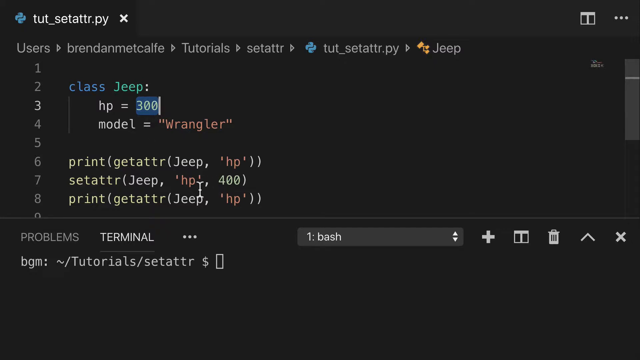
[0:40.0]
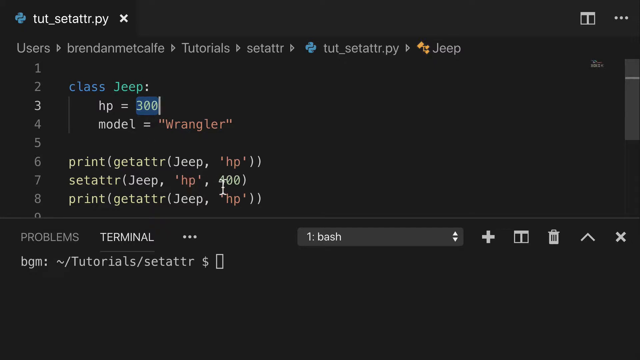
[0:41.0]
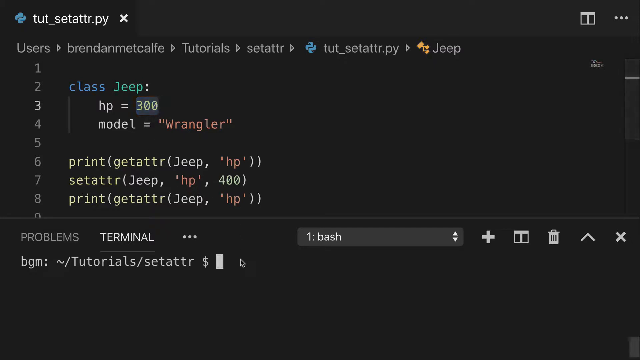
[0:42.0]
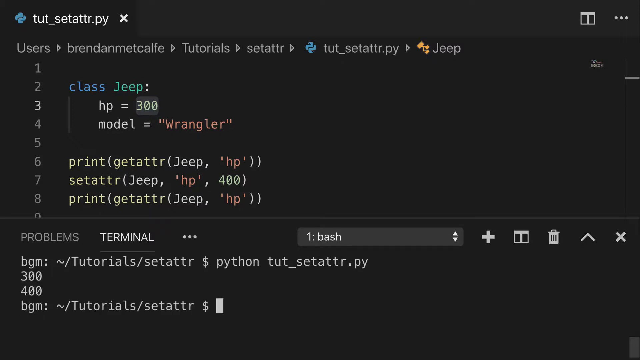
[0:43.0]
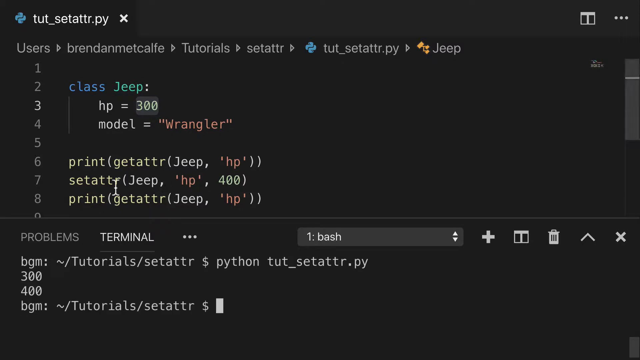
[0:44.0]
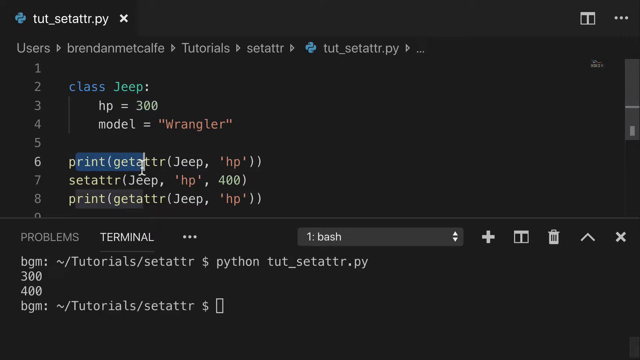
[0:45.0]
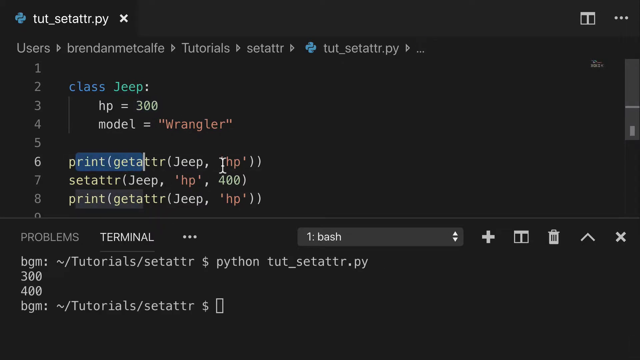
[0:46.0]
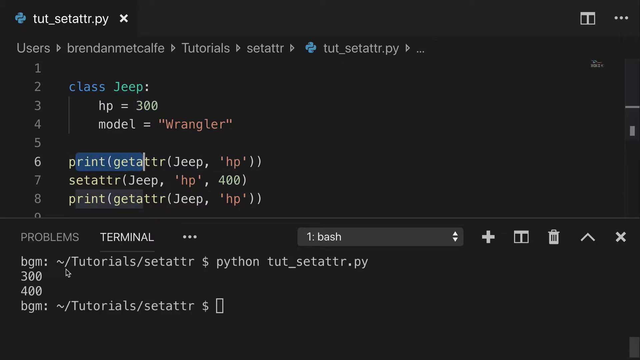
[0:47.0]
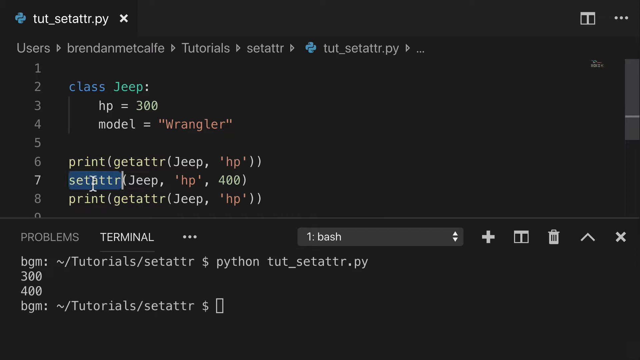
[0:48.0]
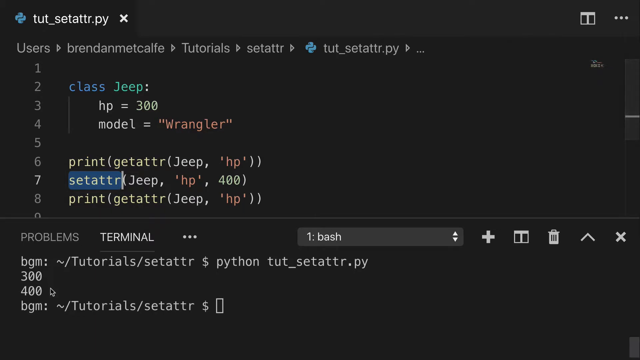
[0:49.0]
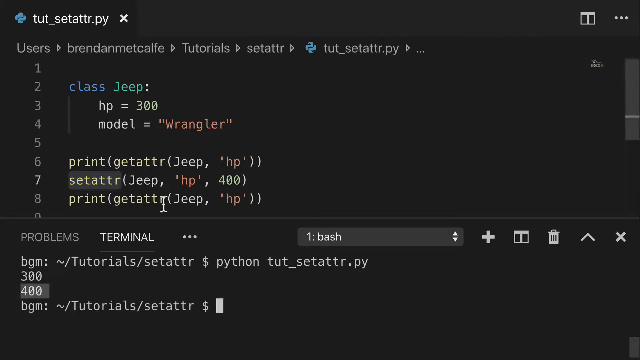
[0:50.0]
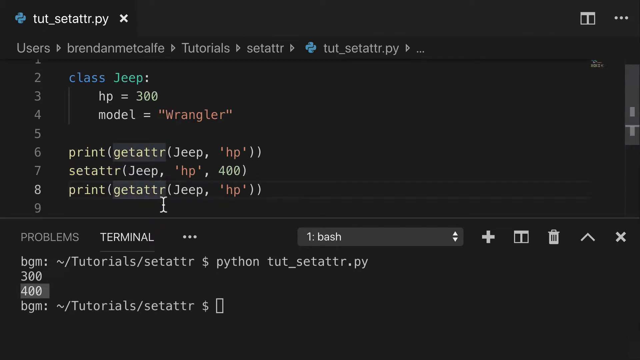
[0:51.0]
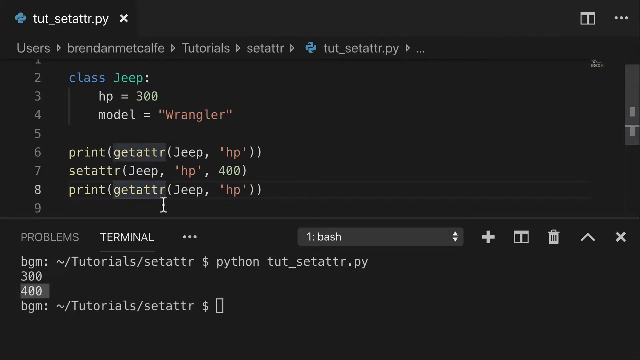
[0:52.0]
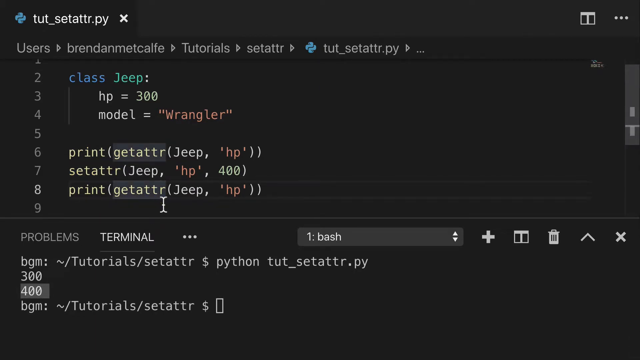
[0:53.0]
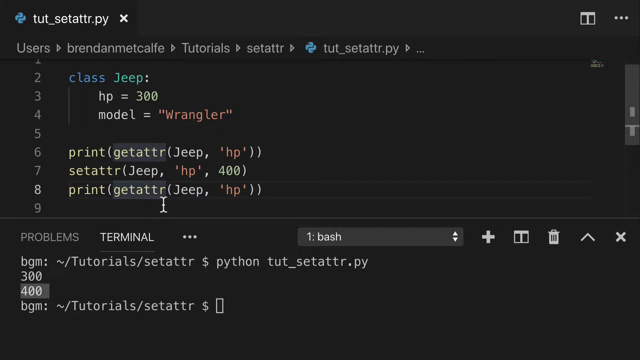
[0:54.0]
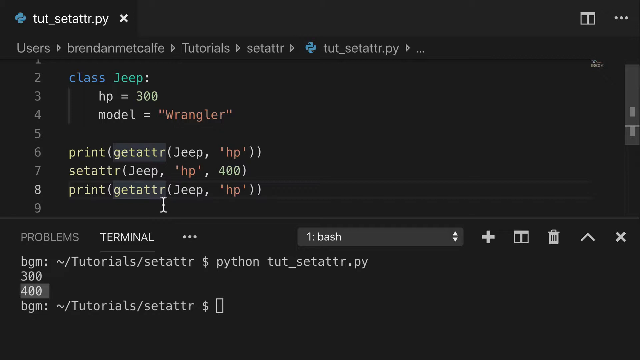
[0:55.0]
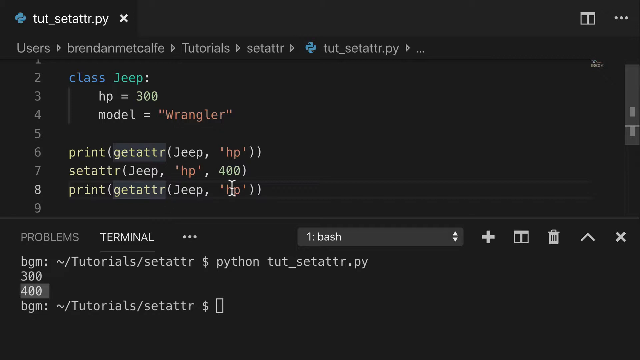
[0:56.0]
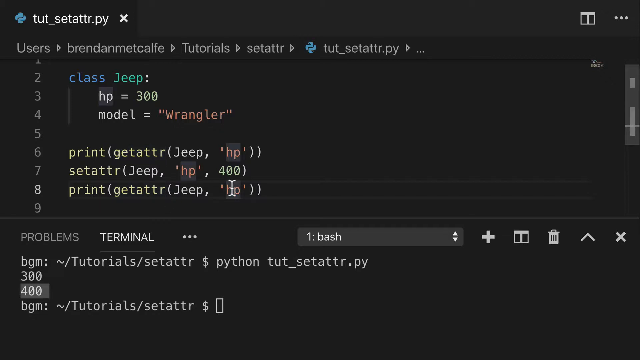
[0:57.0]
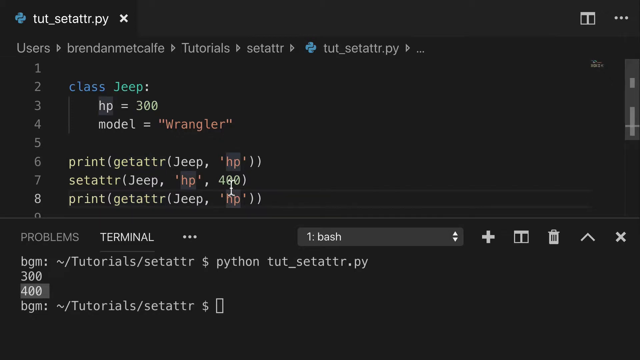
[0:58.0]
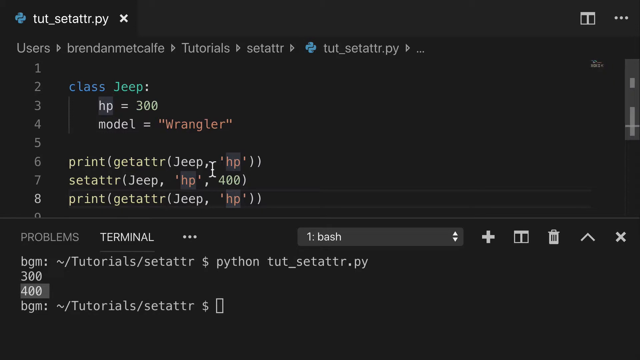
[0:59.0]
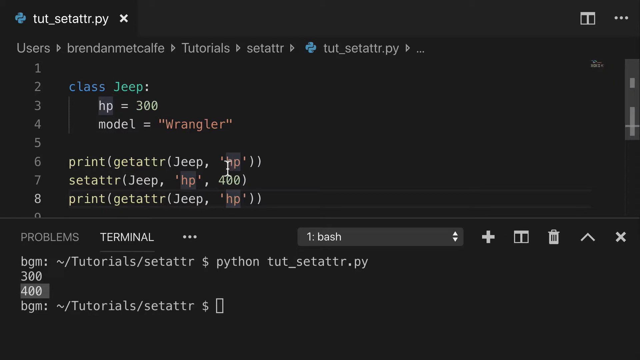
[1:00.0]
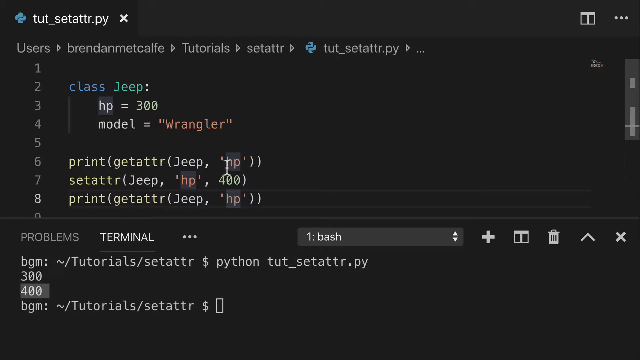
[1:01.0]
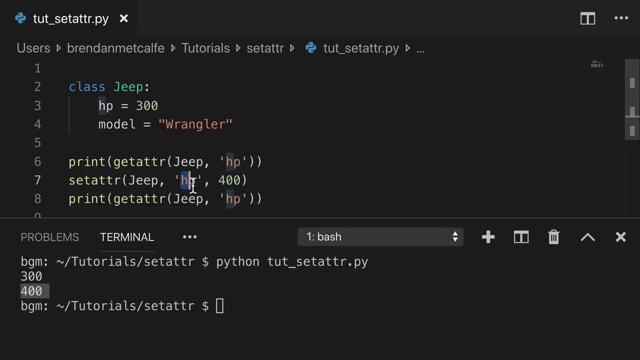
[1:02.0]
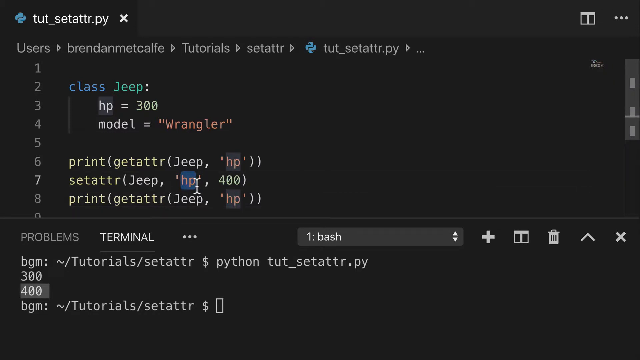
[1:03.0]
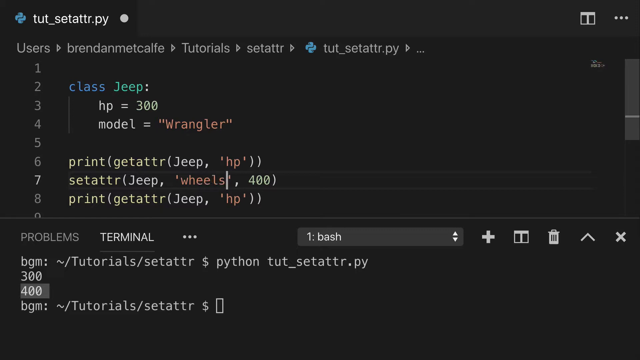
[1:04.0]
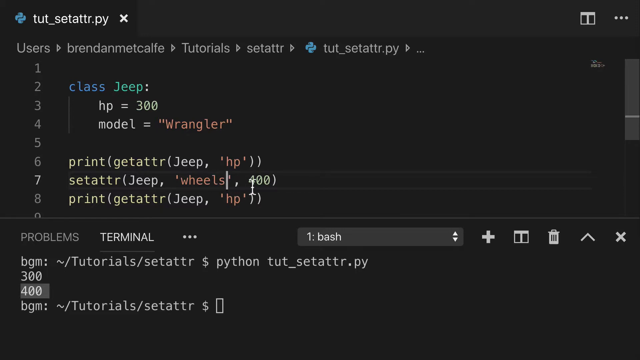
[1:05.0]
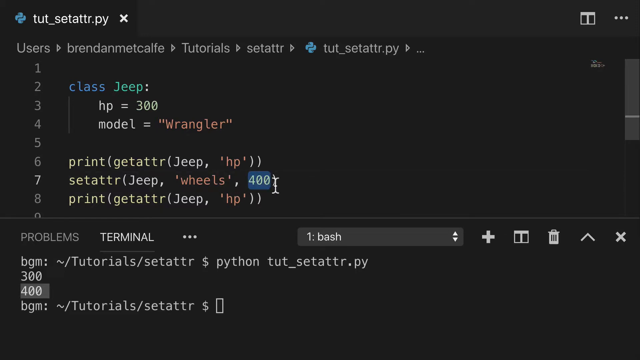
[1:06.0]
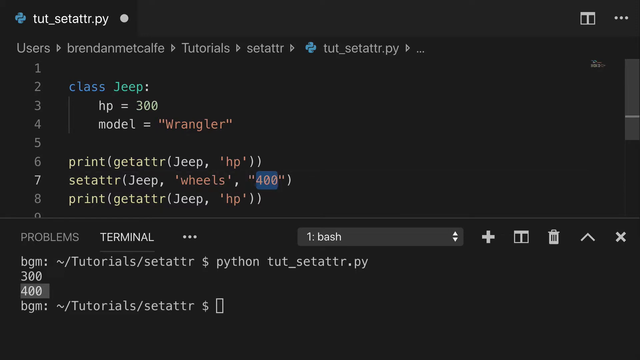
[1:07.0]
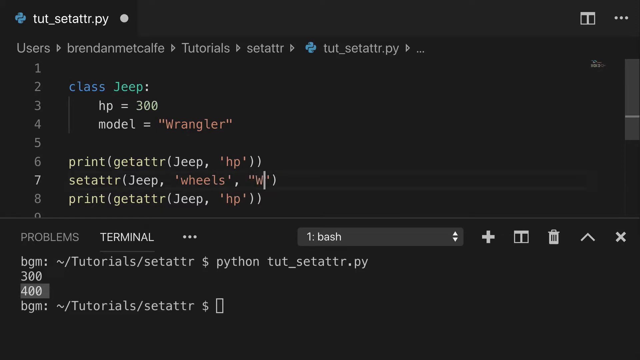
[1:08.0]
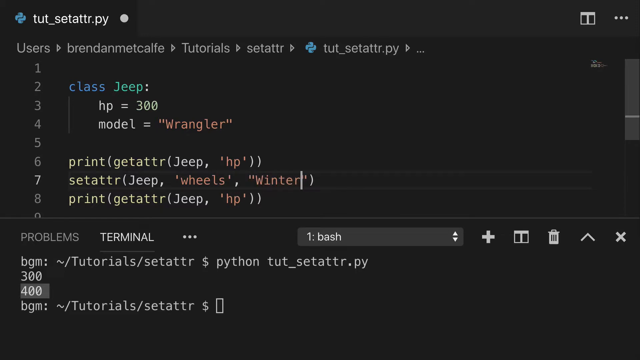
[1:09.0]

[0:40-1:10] A screen shows text at the top left reading "toot_setattr.py" and a path reading "users", "brendan metcalf", "tutorials", "setattr", "toot_setattr.py", "jeep", with forward arrows between the parts. Below are numbered lines one through nine: line one is blank, line two says "class jeep," line three says "hp = 300," line four says "model wrangler," line five is blank, line six says "print getattr jeep hp," line seven says "setattr jeep hp 400," and line eight says "print getattr jeep hp." Different parts are shown. At the bottom are "problems" and "terminal," along with "bmg," then "300," then "400"; the "400" is highlighted. Changes are made on the upper part of the page while different things are highlighted: "hp" is taken out, the word "wheels" is typed in, the value is changed from 300 to 400, and then it is changed to "winter," changing the information on the screen.